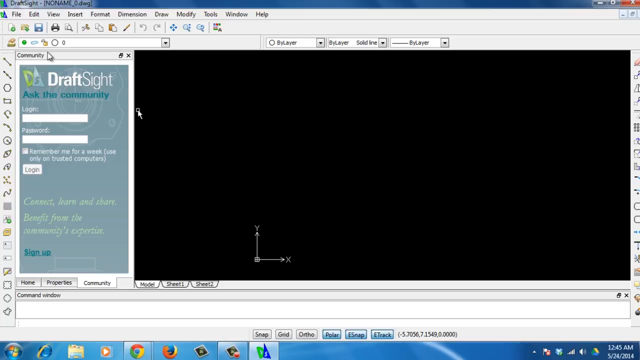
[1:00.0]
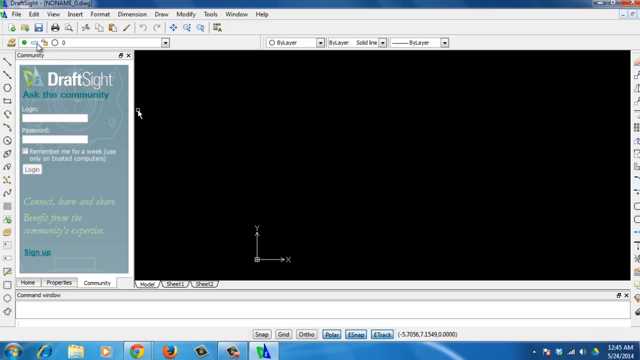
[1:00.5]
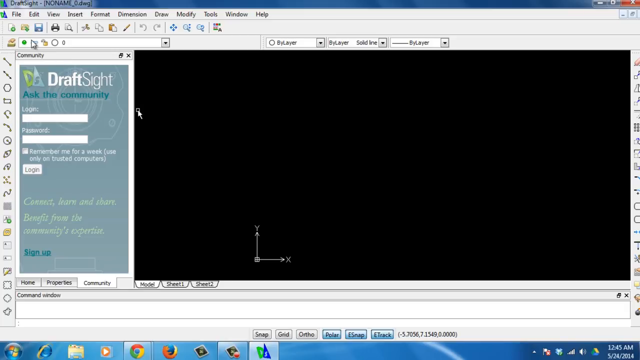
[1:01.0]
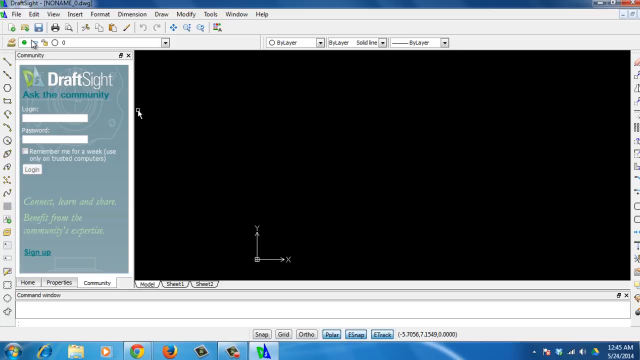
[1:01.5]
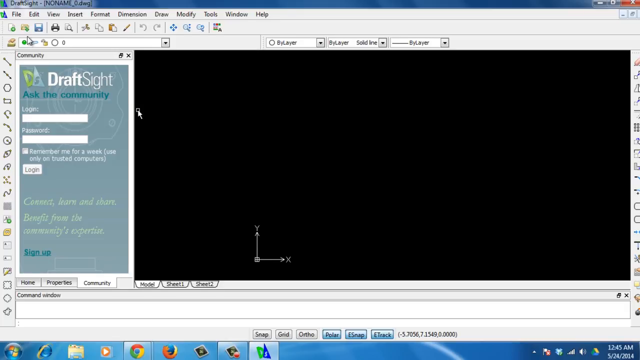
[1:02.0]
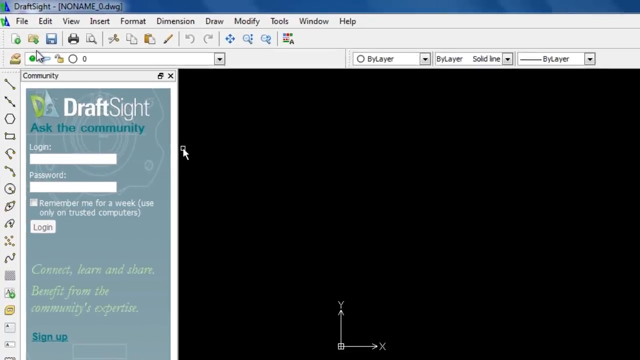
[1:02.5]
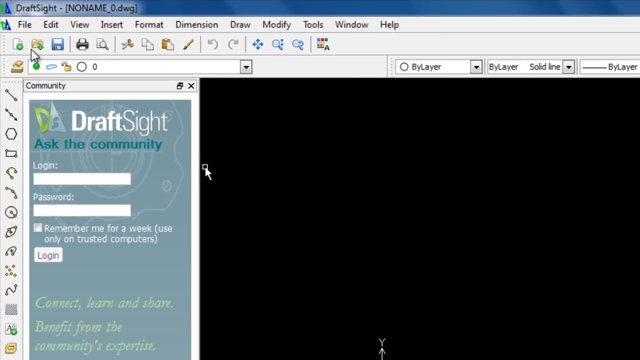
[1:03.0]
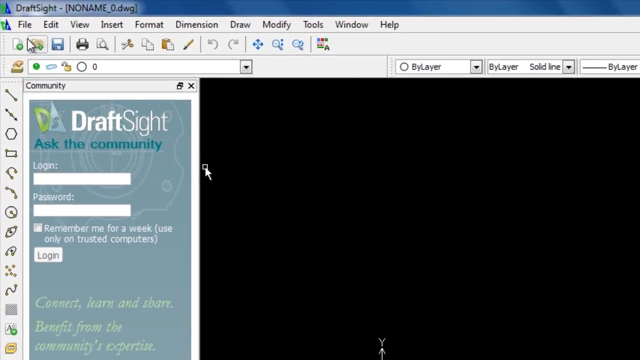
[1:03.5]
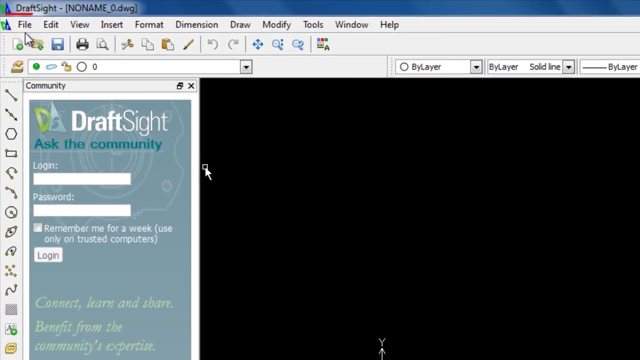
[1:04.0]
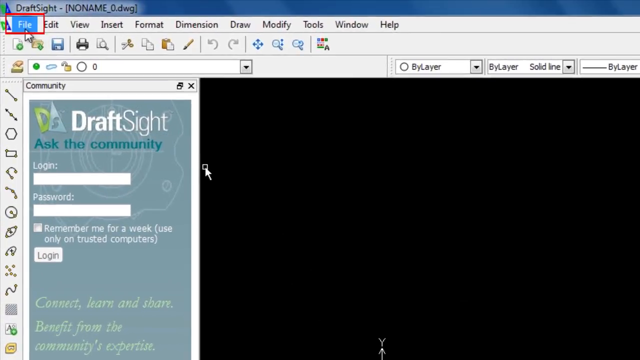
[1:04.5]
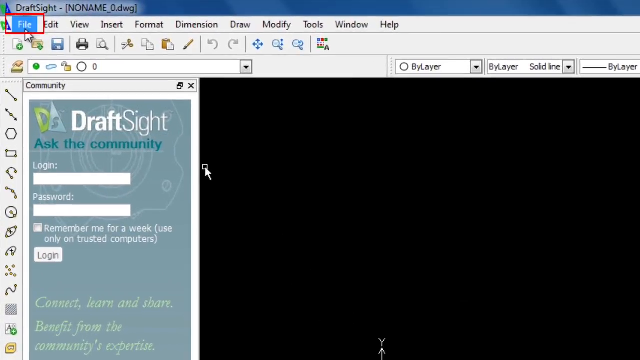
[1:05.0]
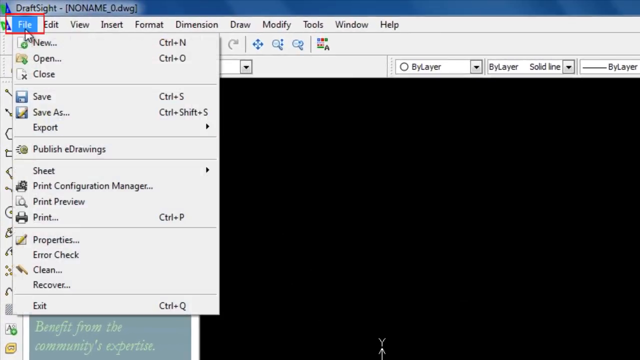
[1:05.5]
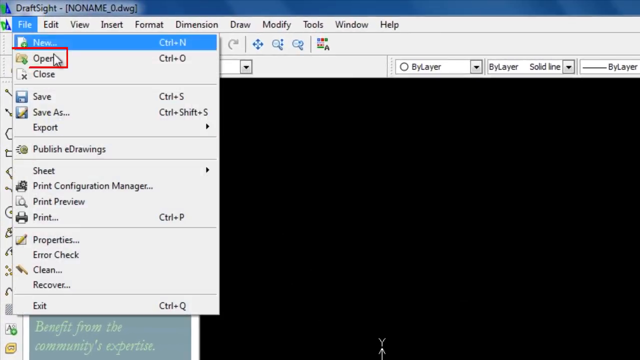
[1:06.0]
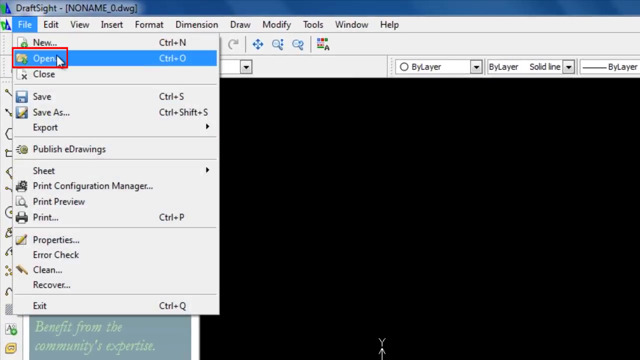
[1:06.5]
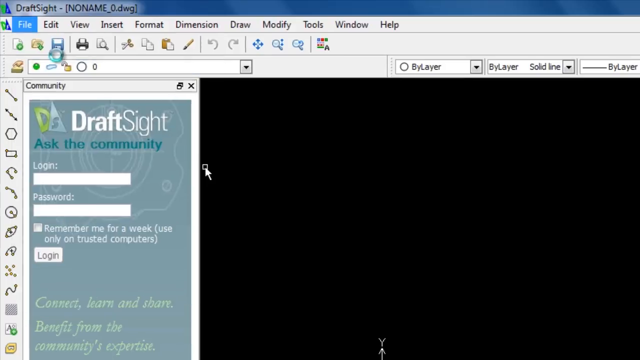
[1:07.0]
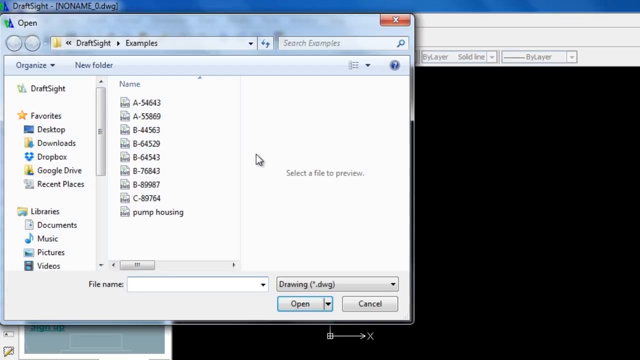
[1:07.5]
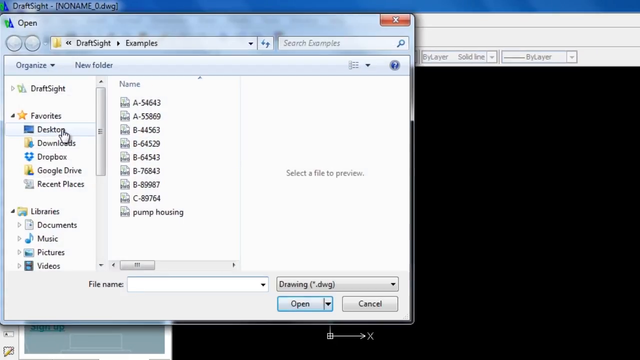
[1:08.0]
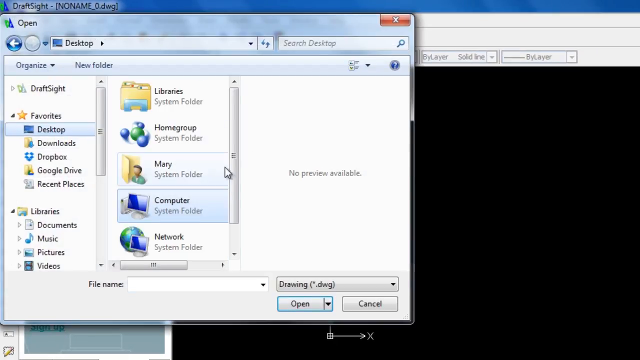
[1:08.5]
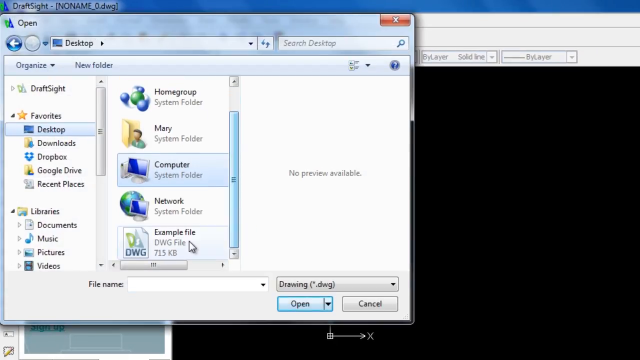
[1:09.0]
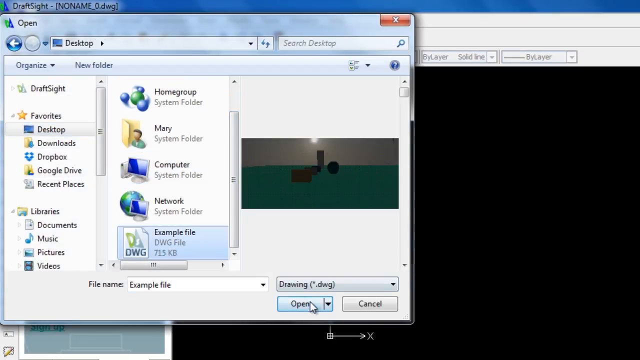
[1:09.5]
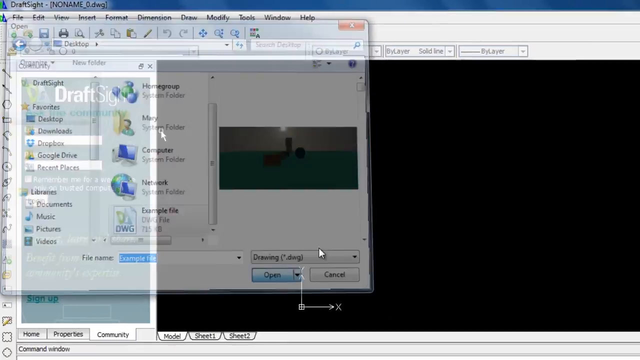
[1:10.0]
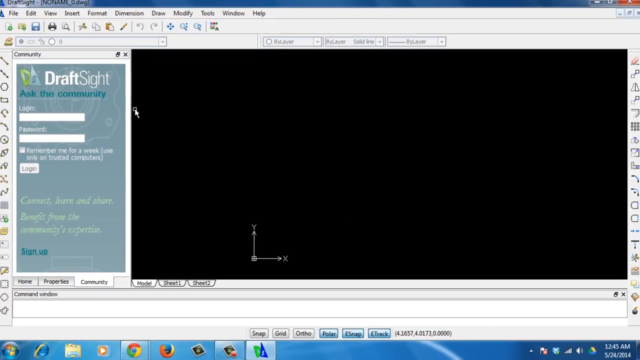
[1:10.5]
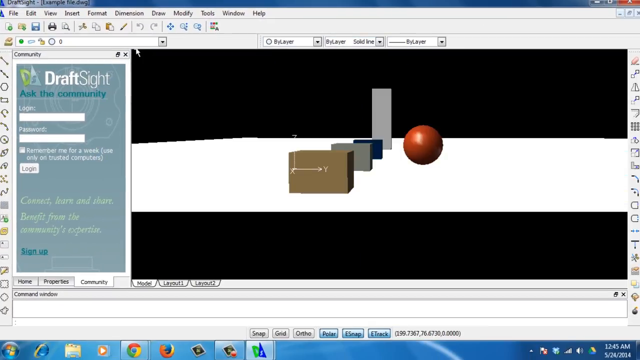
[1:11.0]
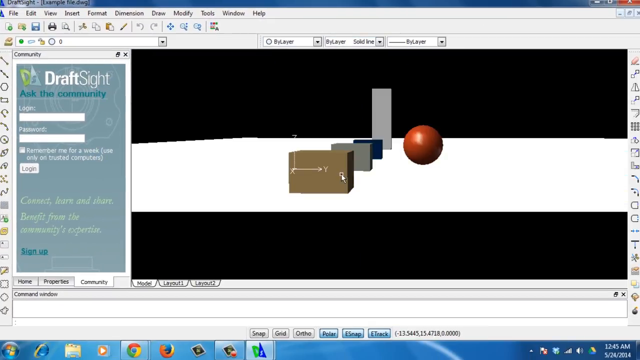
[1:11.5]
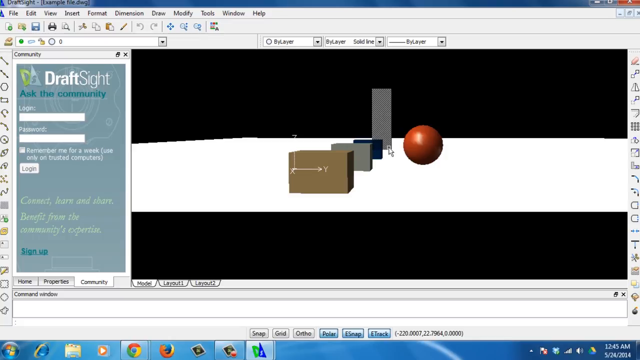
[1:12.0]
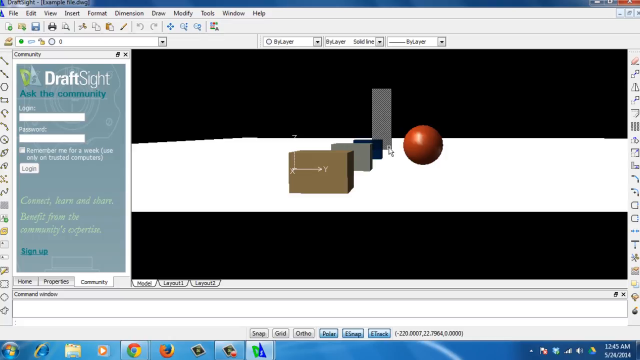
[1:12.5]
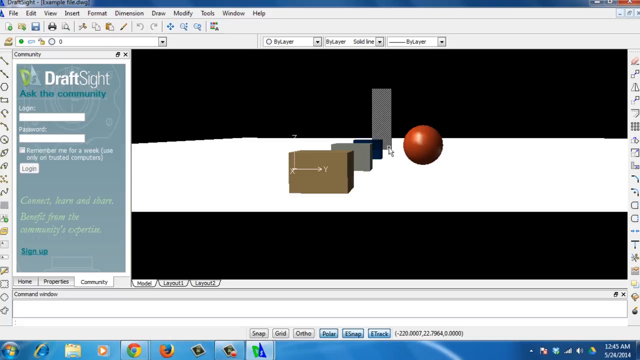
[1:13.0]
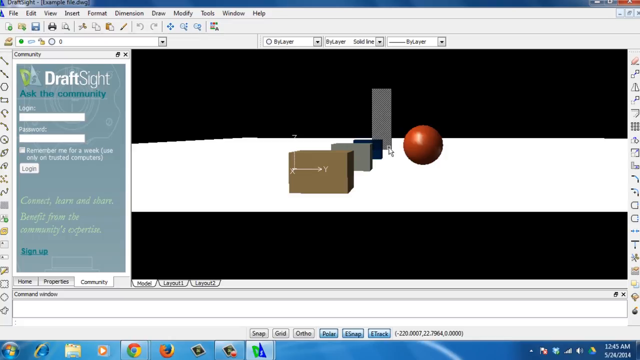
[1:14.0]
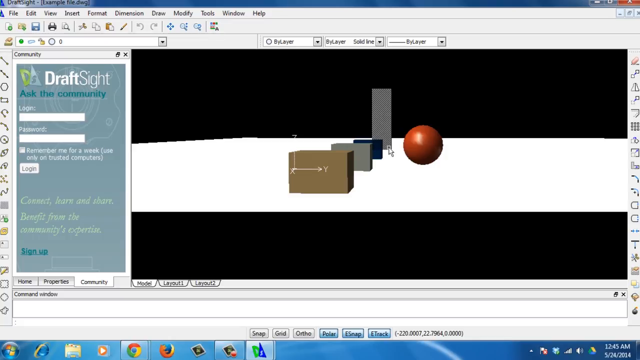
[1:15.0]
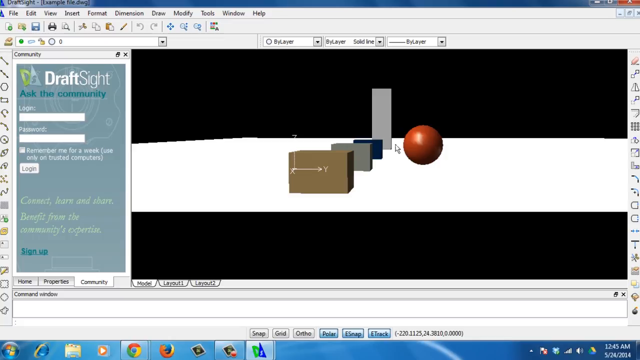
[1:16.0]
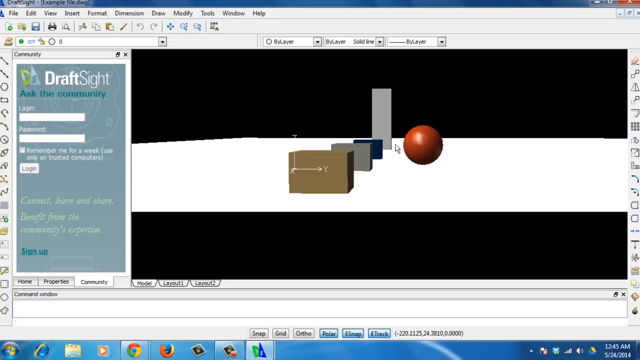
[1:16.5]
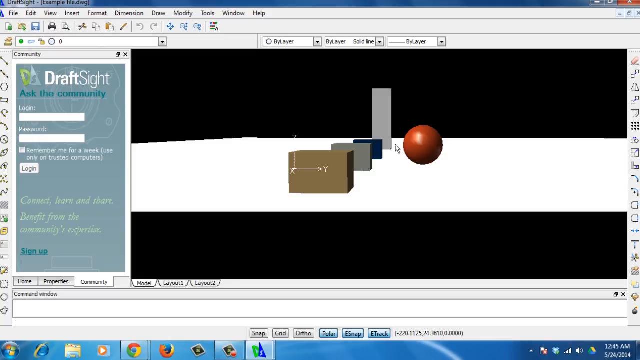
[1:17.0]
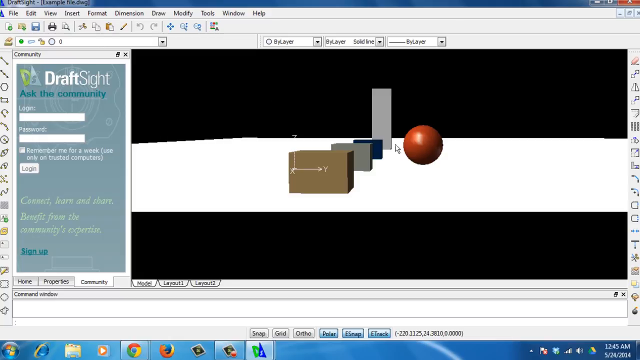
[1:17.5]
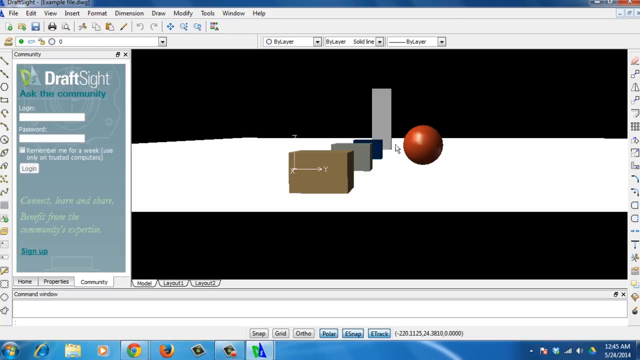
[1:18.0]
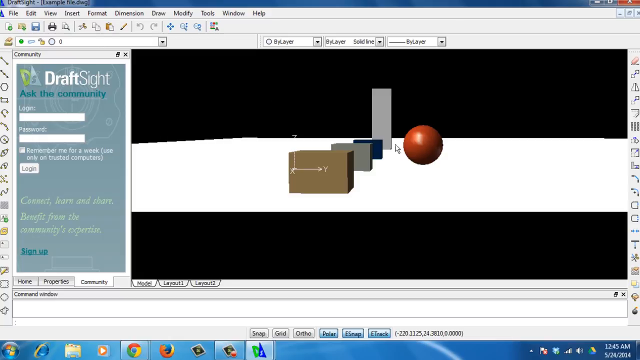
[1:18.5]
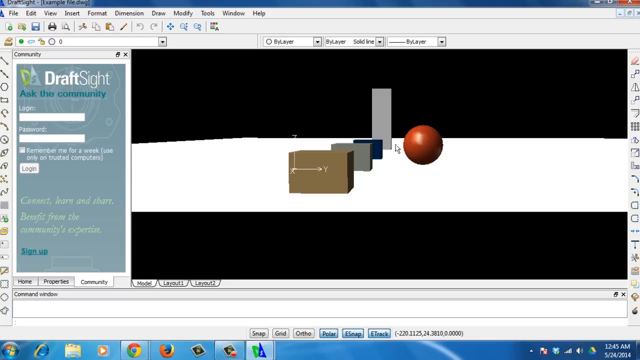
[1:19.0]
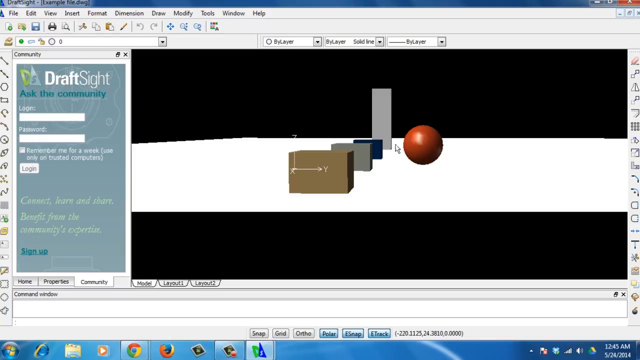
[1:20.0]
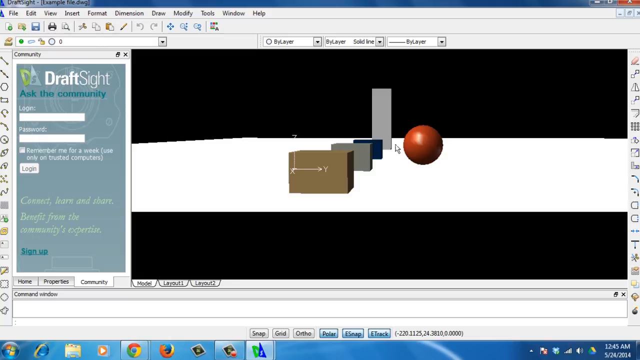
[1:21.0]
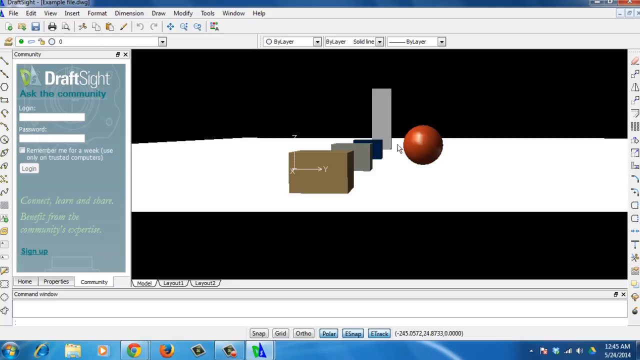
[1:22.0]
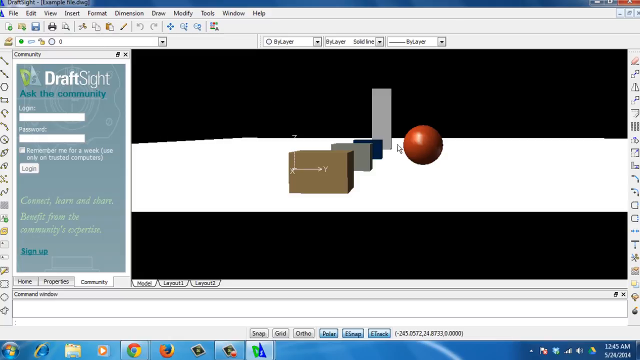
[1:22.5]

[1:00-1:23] DraftSight opens on a blank, black document with only two arrows pointing to the X and Y axes. The user zooms in on the menu bar at the top of the program, which has the buttons file, edit, view, insert, format, dimension, draw, modify, tools, windows, and help. The user clicks file, drawing a red box around the file button, and a drop-down menu of options appears. The user navigates to open and highlights it with the red box, and a browse pop-up appears. The user scrolls down to the file they tried to open at the beginning, and after one or two seconds the file loads. It is a graphic design file containing five different solids resting on a white board: three cubes, one that seems like a long box, and a sphere. The video ends there.